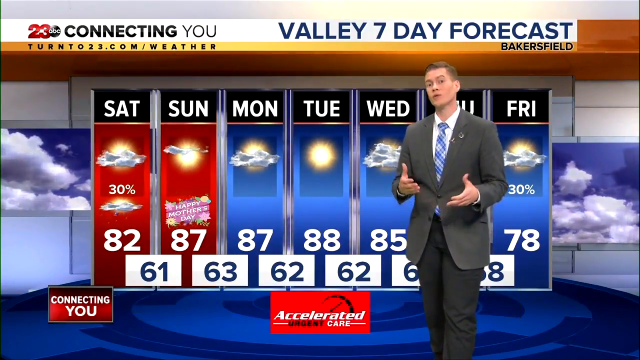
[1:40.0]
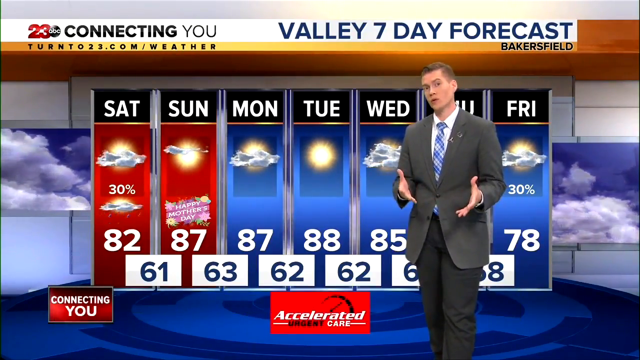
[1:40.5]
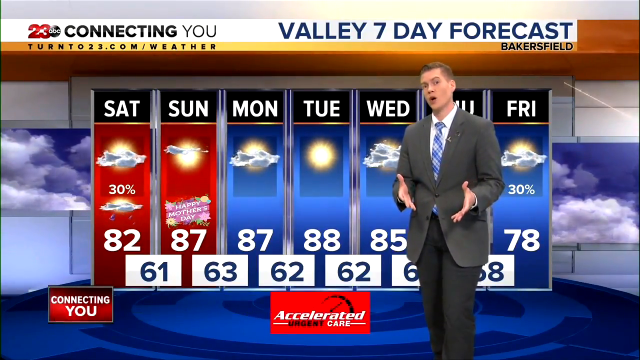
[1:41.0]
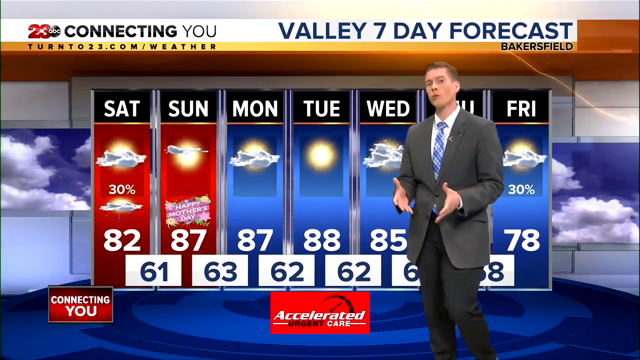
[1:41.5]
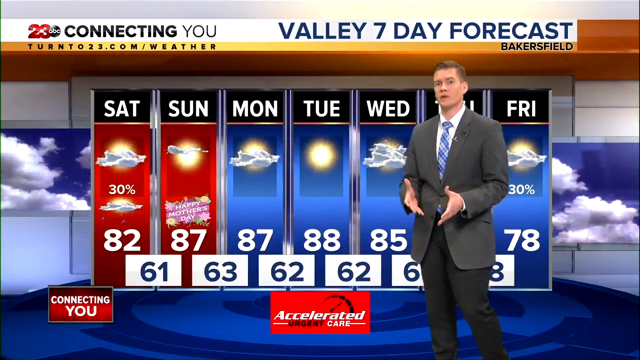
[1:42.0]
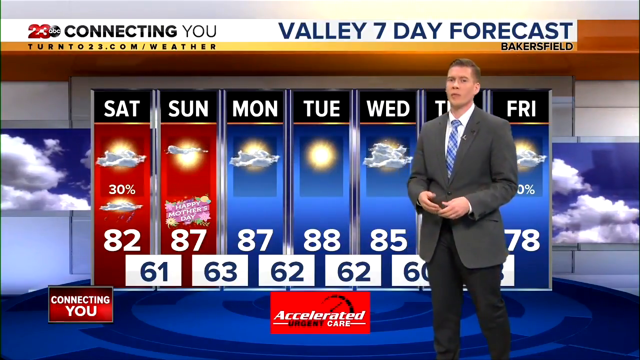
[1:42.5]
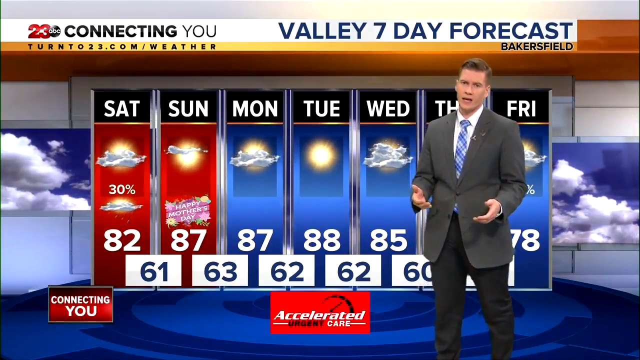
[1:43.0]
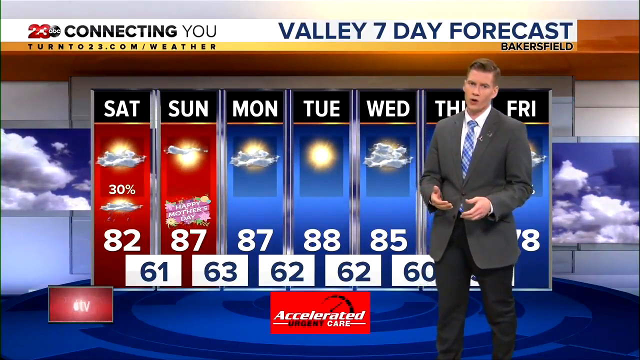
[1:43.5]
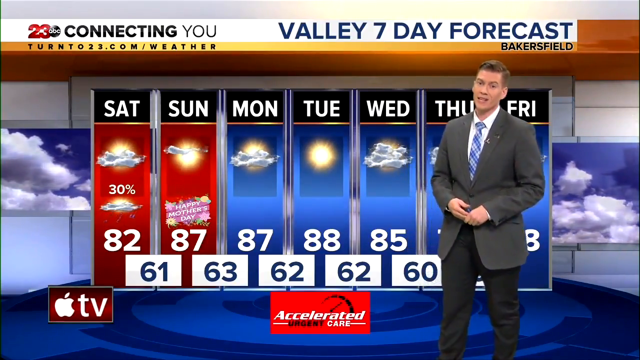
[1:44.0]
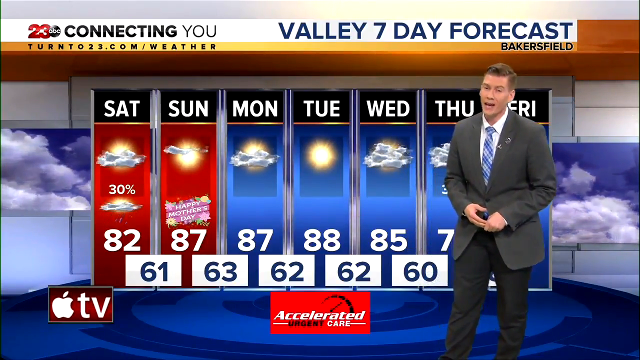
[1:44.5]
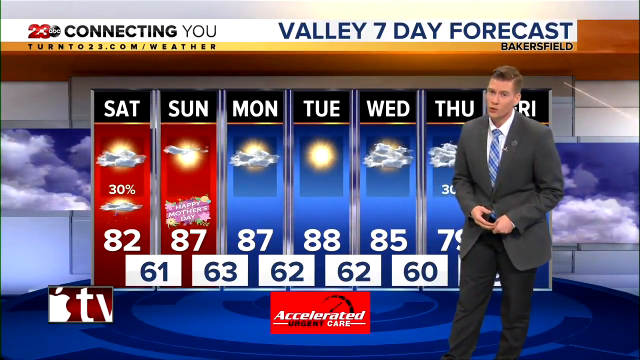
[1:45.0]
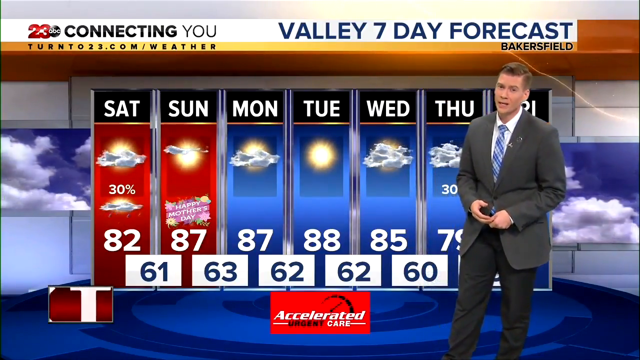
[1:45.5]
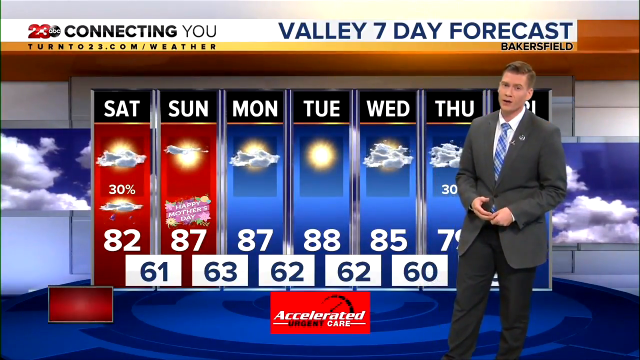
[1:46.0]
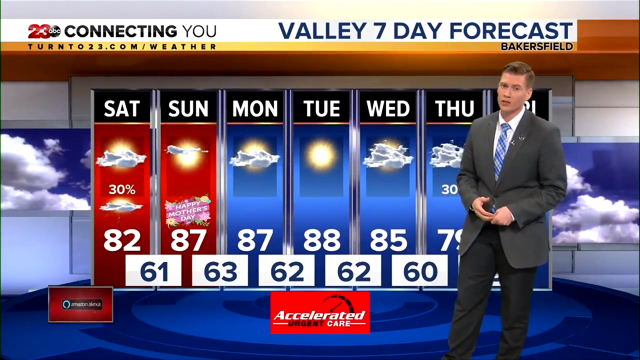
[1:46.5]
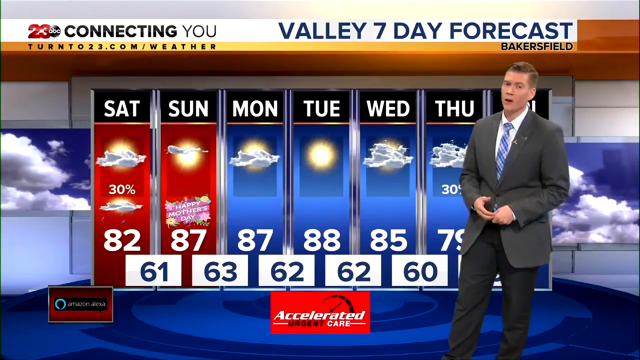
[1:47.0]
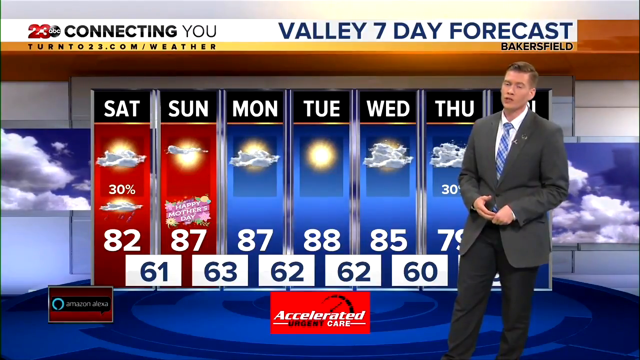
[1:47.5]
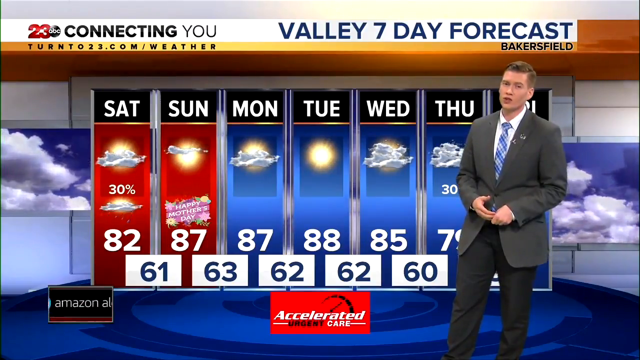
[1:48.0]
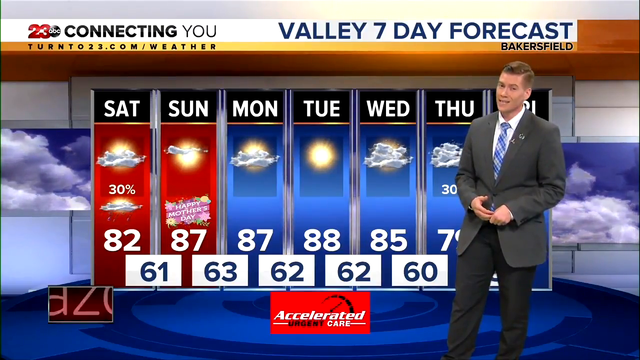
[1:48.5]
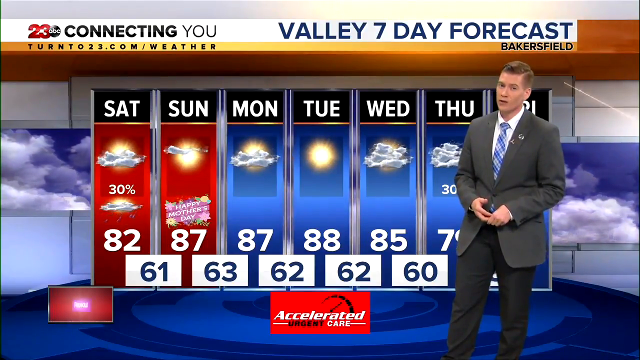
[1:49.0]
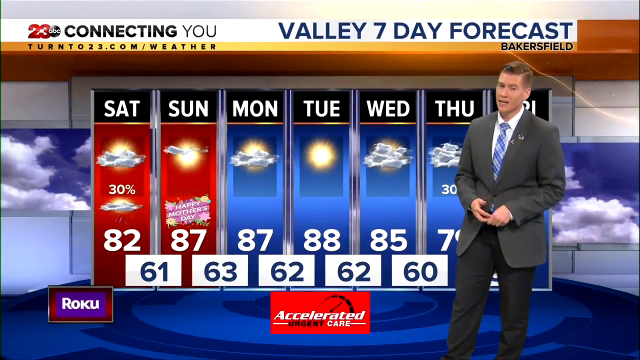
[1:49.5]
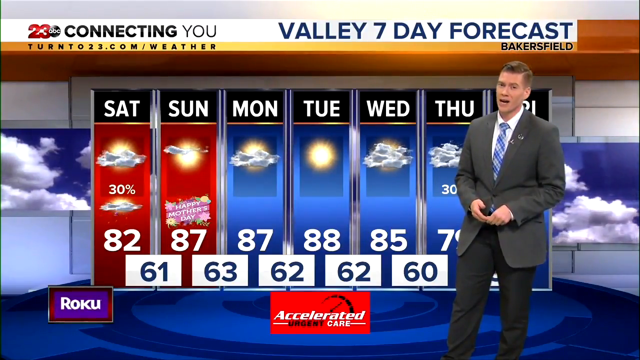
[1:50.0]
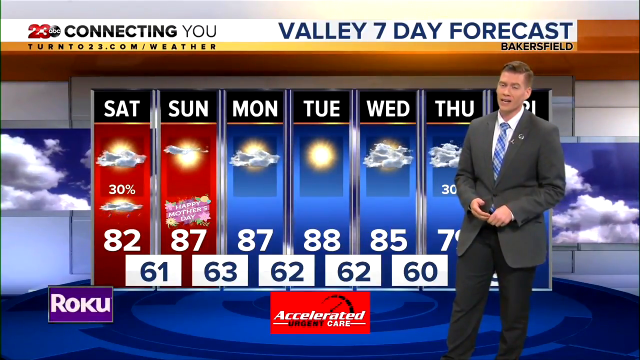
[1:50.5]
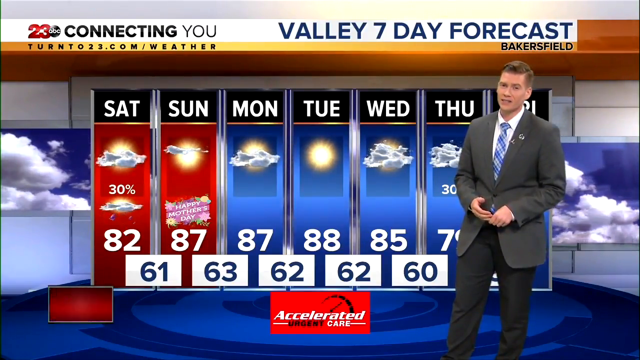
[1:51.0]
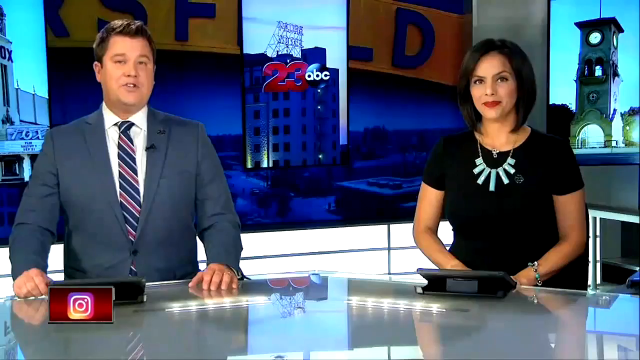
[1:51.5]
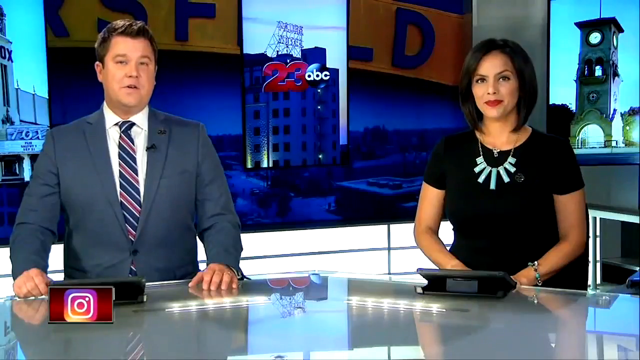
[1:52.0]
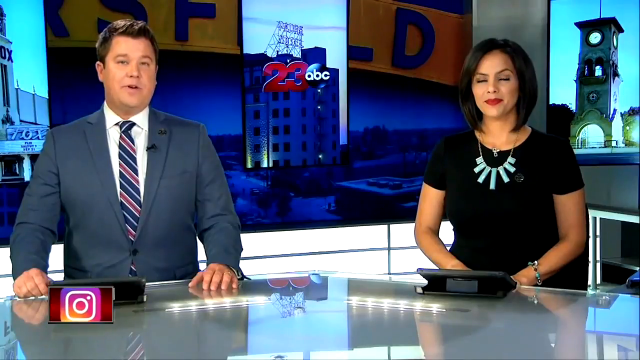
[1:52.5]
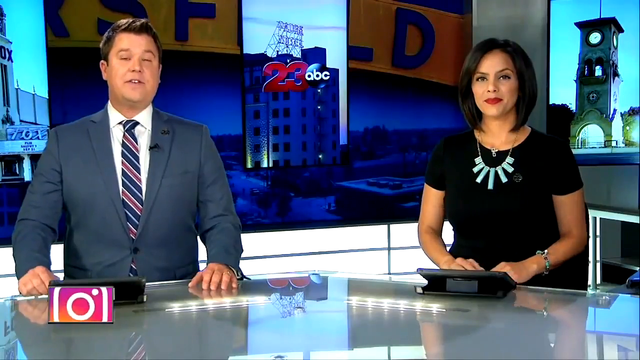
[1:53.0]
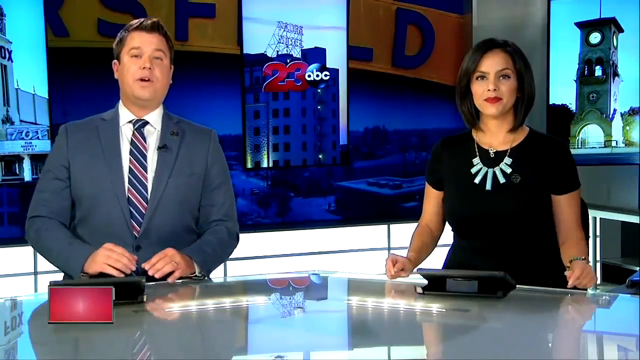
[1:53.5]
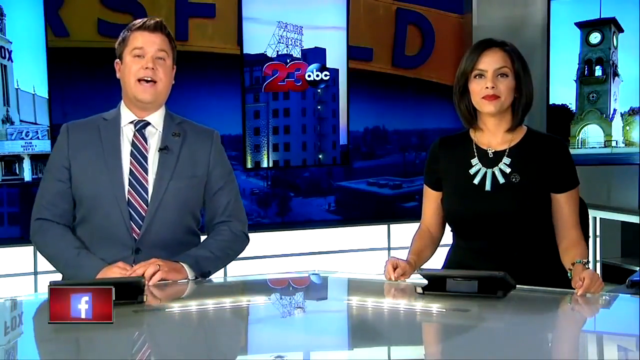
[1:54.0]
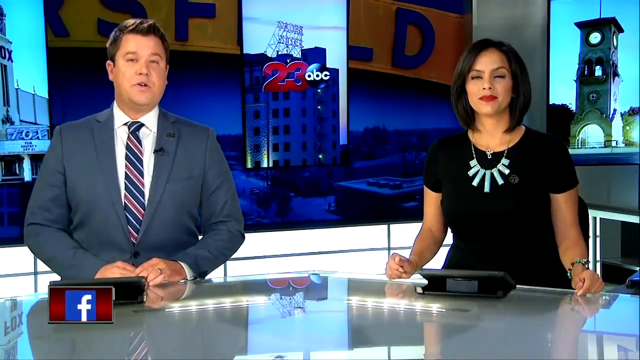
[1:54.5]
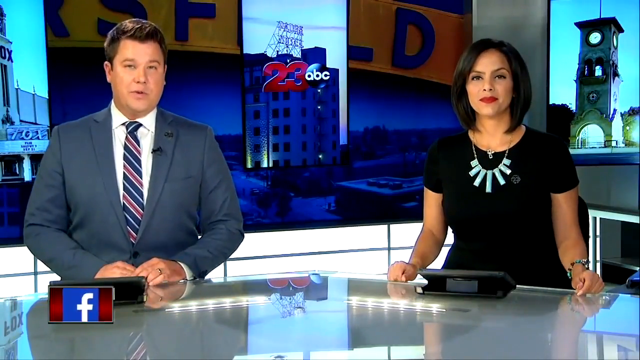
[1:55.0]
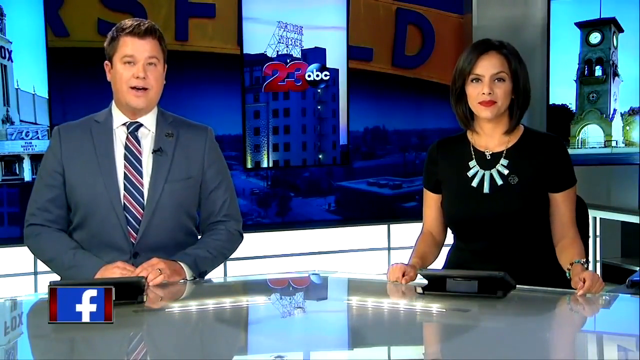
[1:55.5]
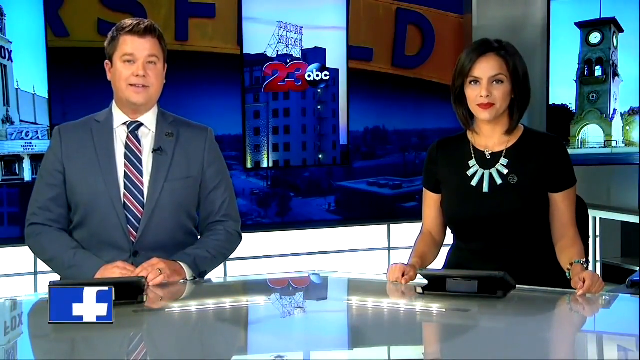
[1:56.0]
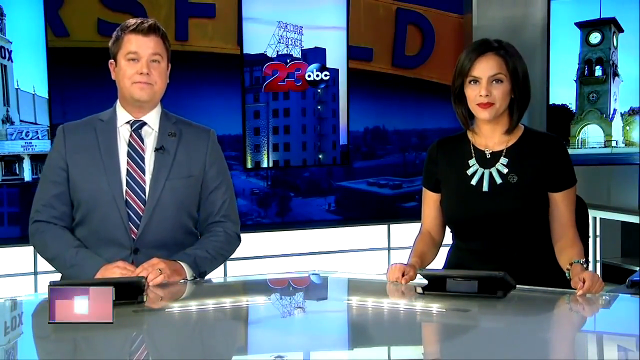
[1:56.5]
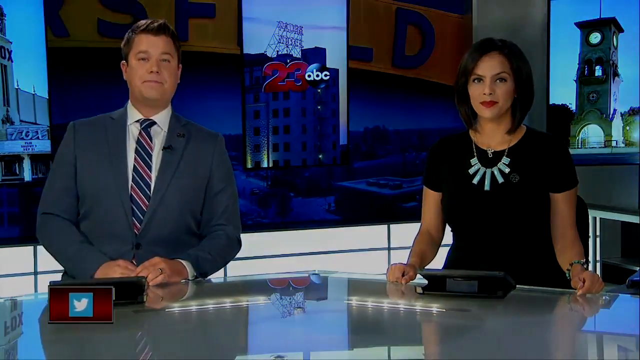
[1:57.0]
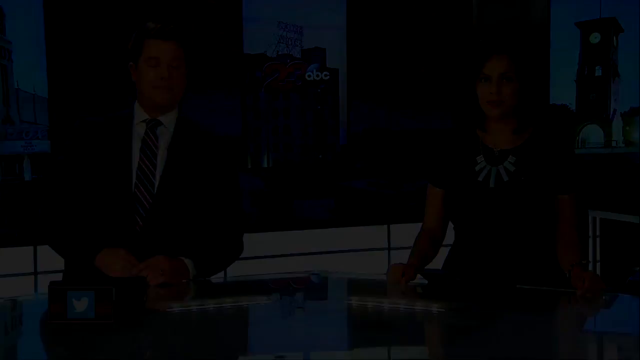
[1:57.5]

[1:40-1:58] A seven-day forecast reads "valley seven day forecast," "channel 23 ABC connecting you," and "turn to 23.com/weather," brought to you by Accelerated Care, along with an advertisement for what may be Amazon AI. Saturday shows a 30% chance of rain, 82 degrees, and a low of 61. Sunday's condition is unreadable, with 87 degrees and a low of 63. Monday is 87 with a low of 62. Tuesday is sunny at 88 degrees with a low of 62. Wednesday is apparently partly cloudy at 85 degrees with a low of 60. Thursday shows a 30% chance of rain, cloudy, at apparently 79 degrees. Friday cannot be seen because the newscaster is standing in the way. The broadcast ends on the two anchors sitting in the newsroom.